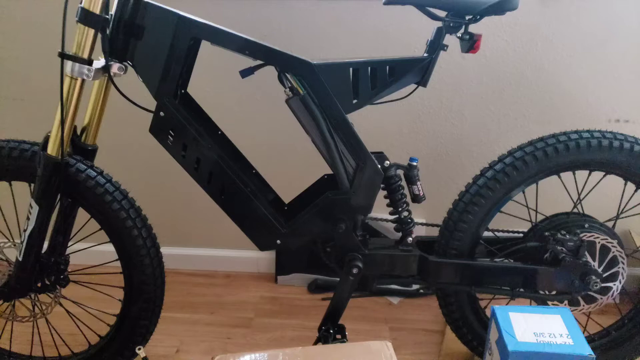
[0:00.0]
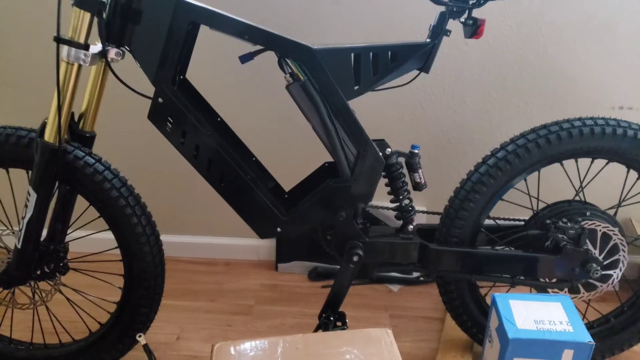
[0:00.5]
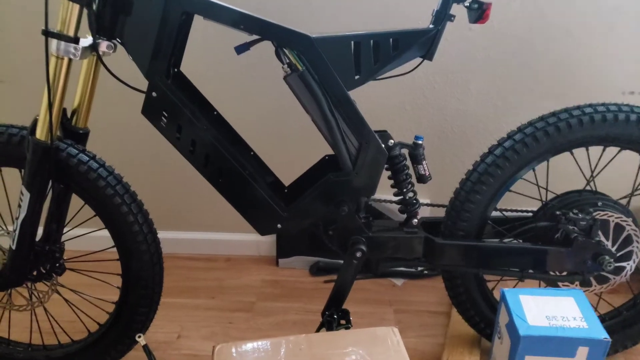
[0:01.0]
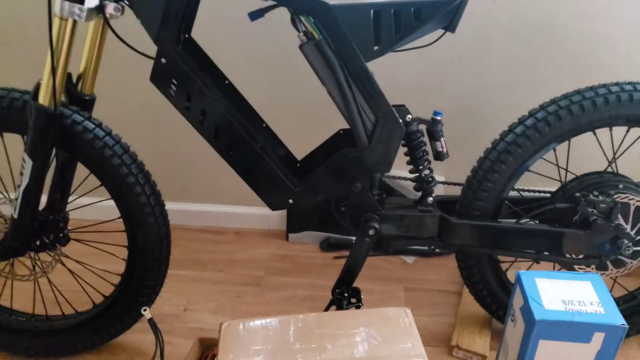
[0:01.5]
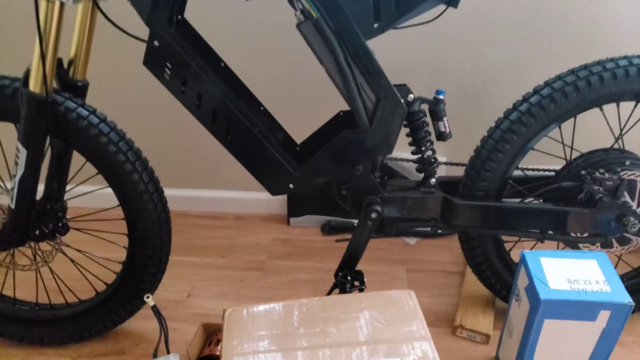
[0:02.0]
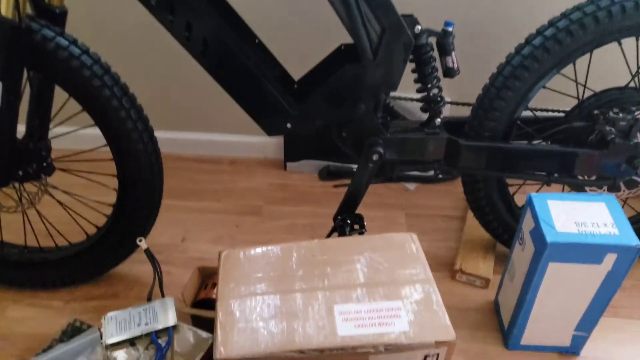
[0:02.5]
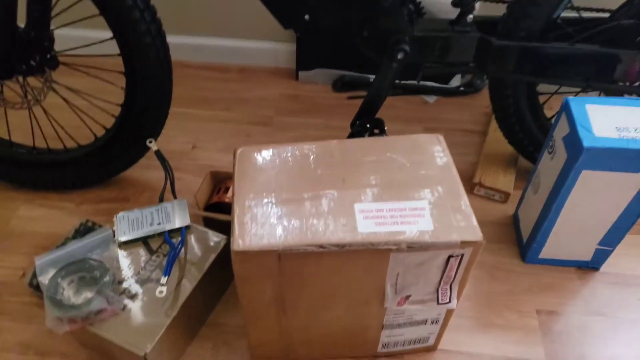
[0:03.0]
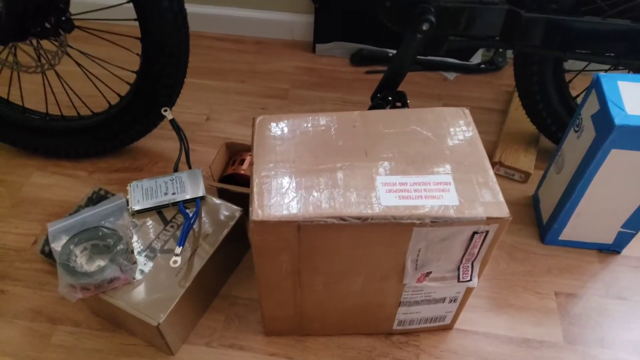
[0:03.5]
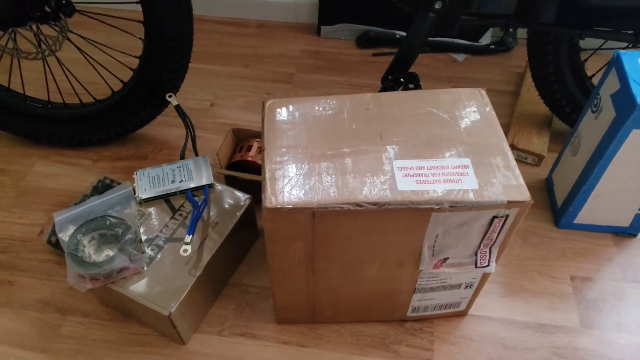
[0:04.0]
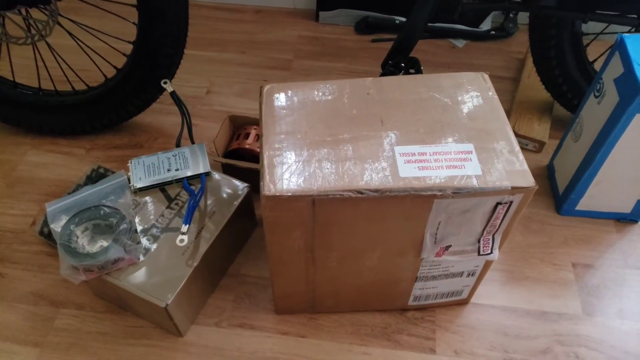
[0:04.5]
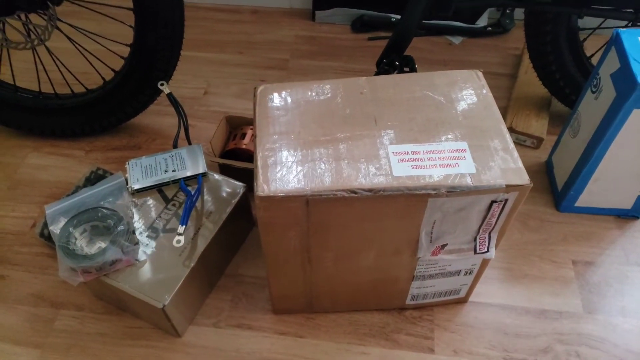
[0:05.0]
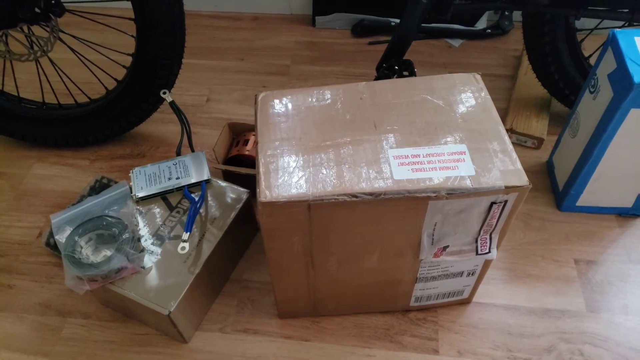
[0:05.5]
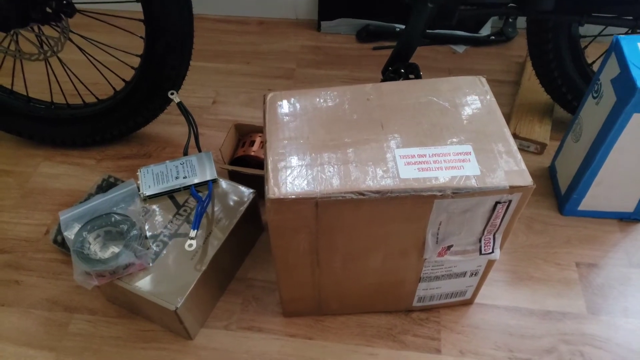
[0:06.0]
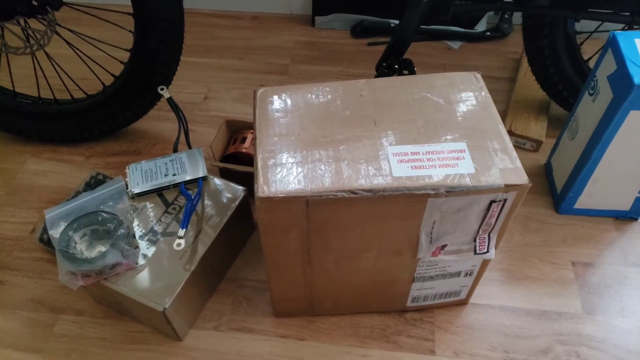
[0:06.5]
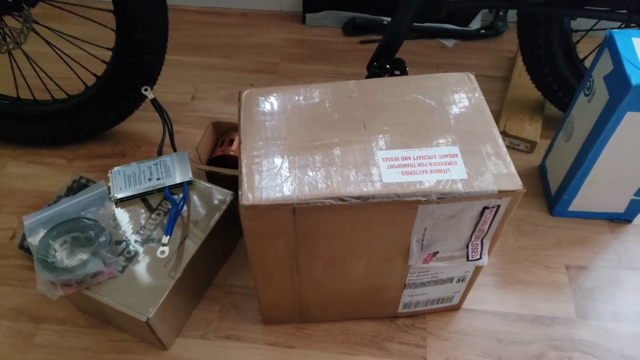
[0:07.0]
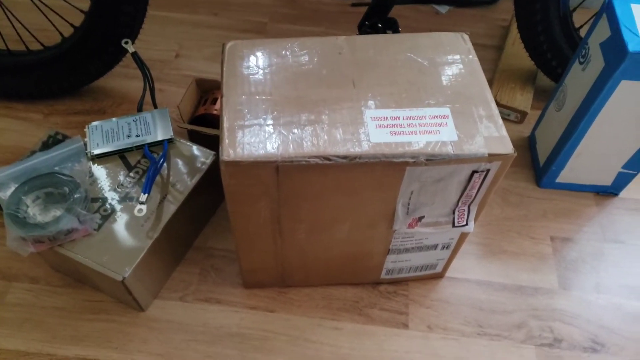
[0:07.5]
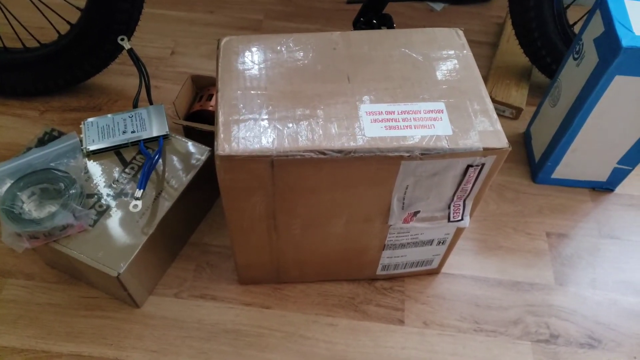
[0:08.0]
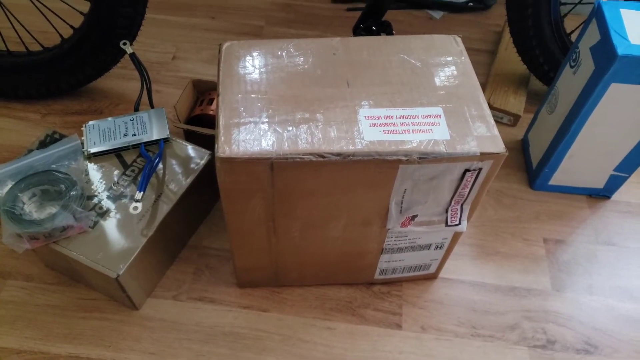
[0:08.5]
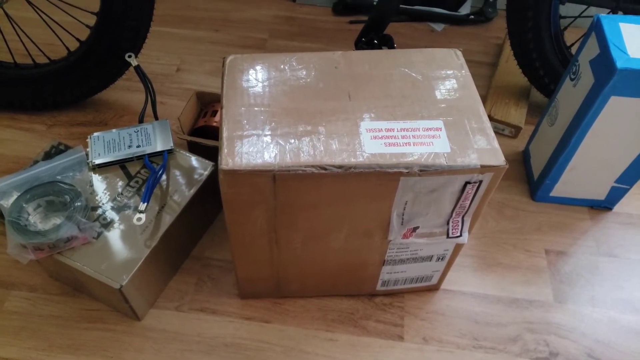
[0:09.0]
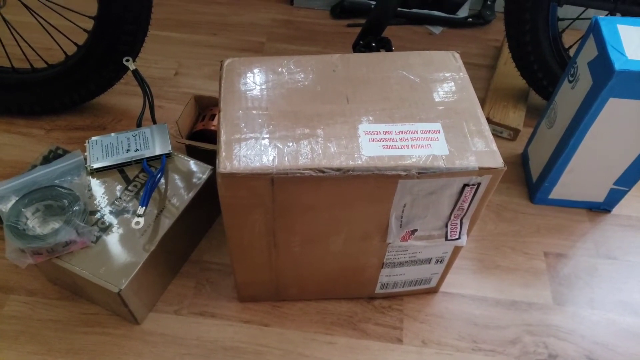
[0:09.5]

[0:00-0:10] Someone records what appears to be a bike inside their house; it might be a stationary bike, though this is hard to tell and it seems not to be. The bike starts in focus in the center of the screen, then the camera quickly pans down to the ground to show packages. There is a slightly crushed box, and to the left of it is another, smaller box holding things like a connector piece that apparently goes to the bike. On top of that connector piece is what appears to be a hard drive, or maybe a baggie with something in it. To the left of that are what appear to be microfiber cloths in a bag. Something brownish, possibly part of the box the bags are on, has an oddly shaped extended portion going out of the box, so it almost looks like something, such as a package, is coming out of the box. On the right of the screen is a blue box, or a white box with blue tape. Most of the footage focuses on the box directly below the bike as the camera pans and zooms in; the box looks a little crushed, though that may be an illusion of the image. It is a brownish box with packing and a UPC code on it.